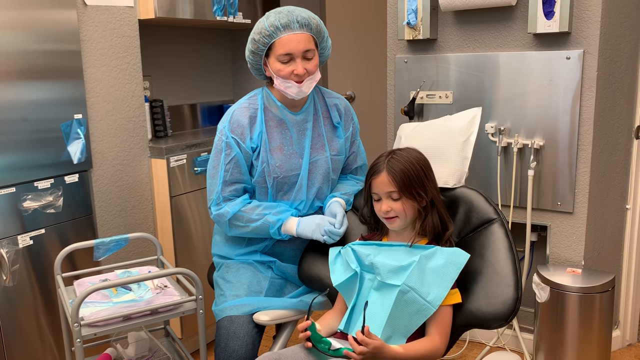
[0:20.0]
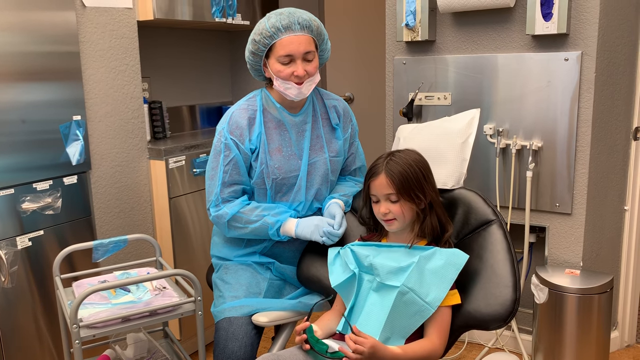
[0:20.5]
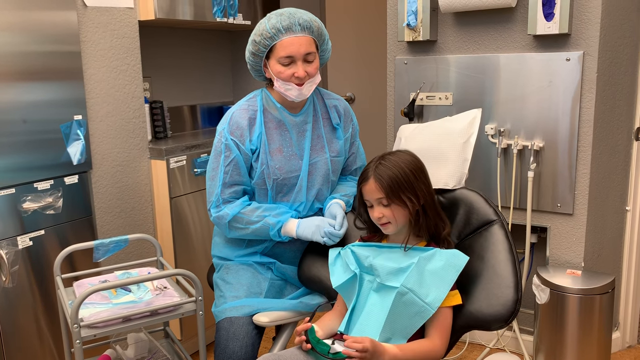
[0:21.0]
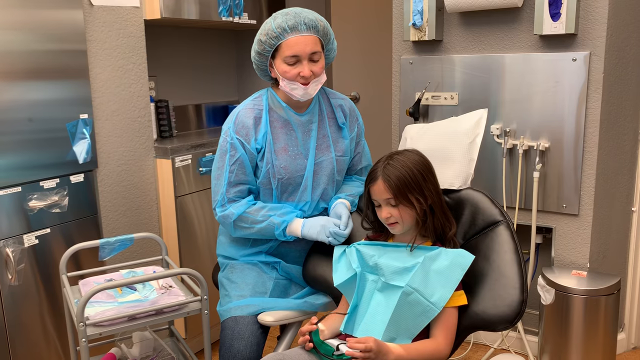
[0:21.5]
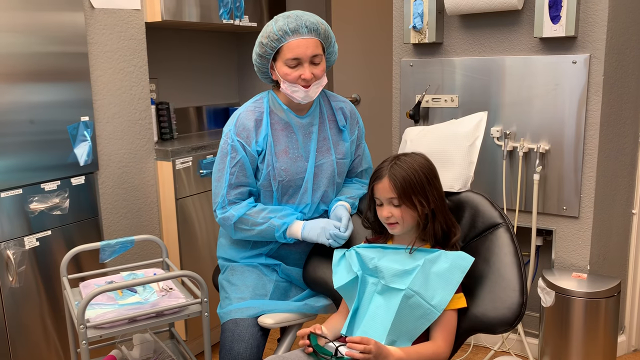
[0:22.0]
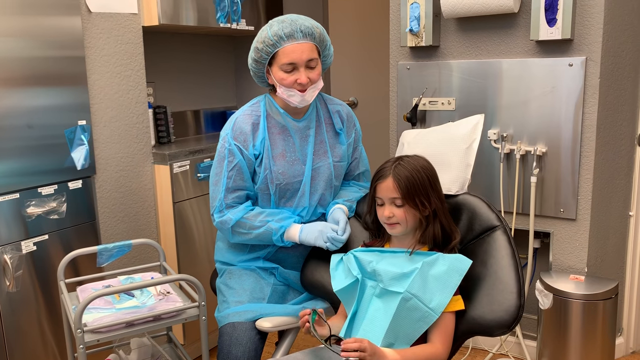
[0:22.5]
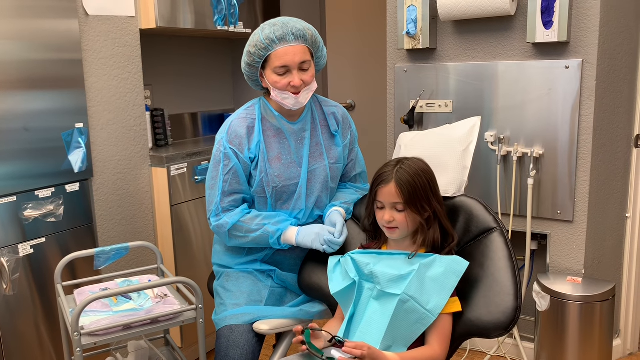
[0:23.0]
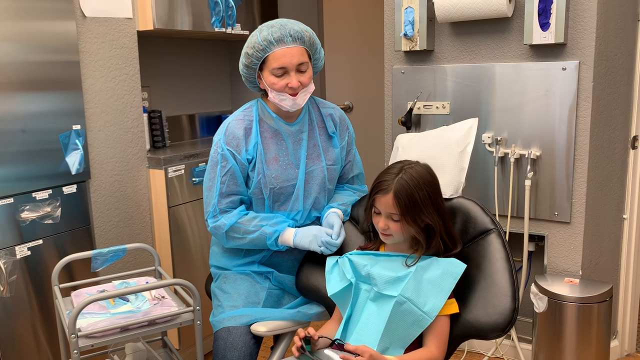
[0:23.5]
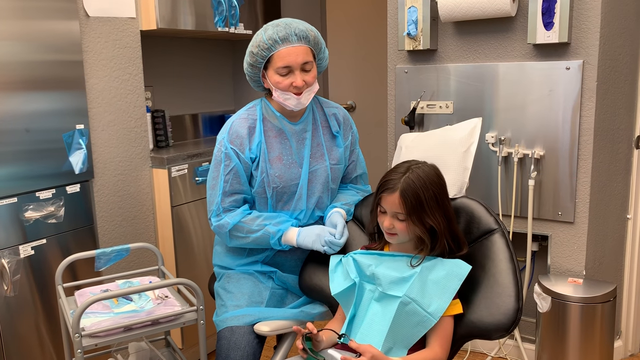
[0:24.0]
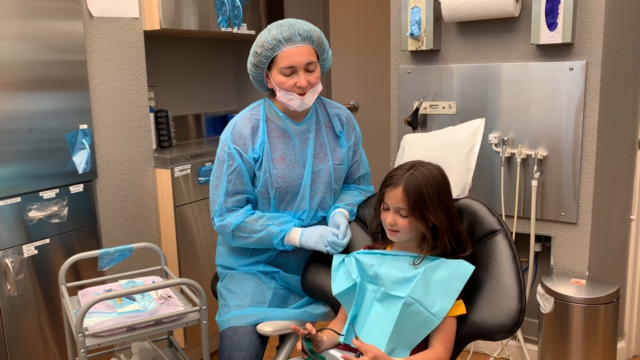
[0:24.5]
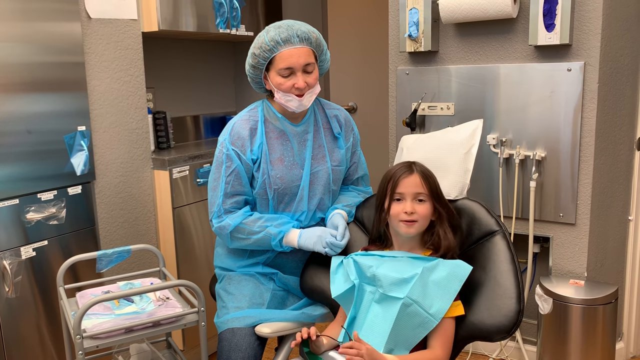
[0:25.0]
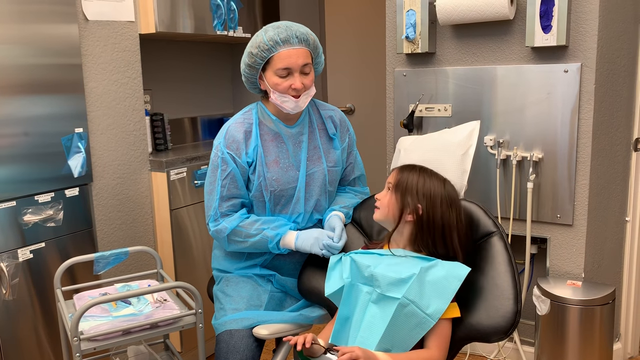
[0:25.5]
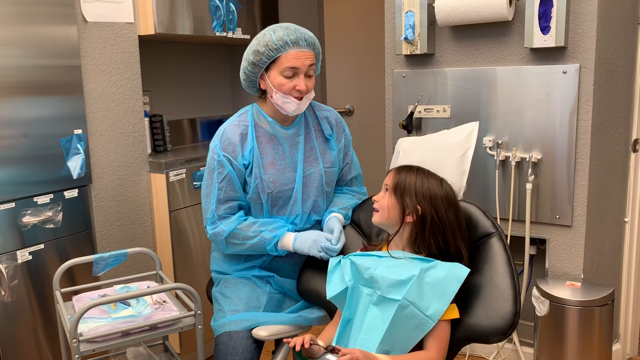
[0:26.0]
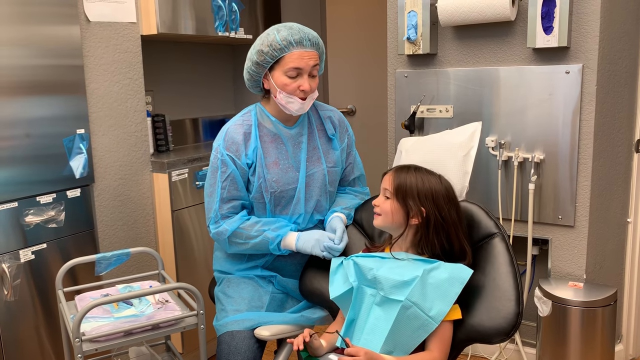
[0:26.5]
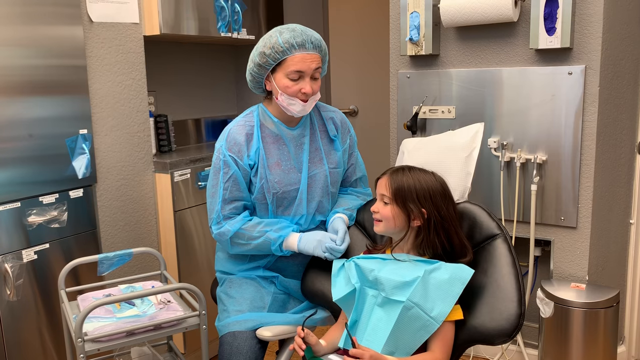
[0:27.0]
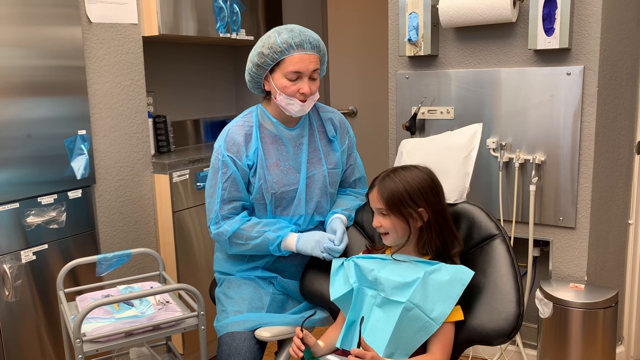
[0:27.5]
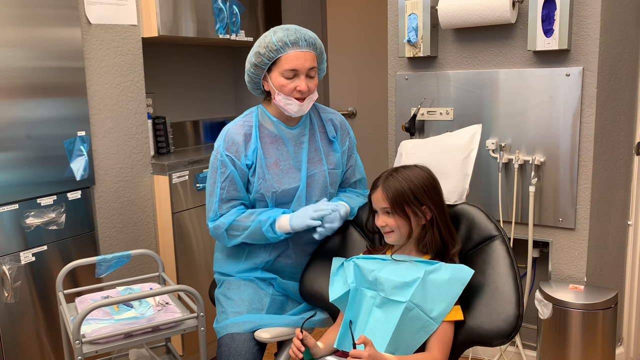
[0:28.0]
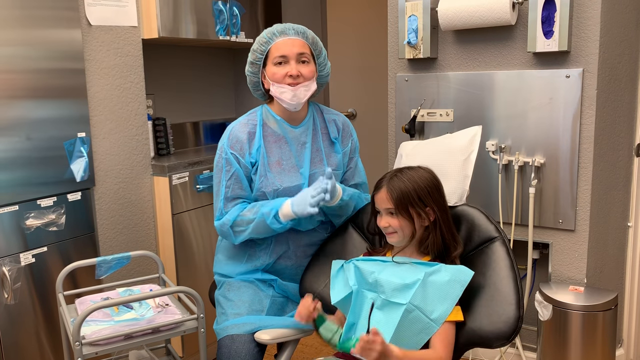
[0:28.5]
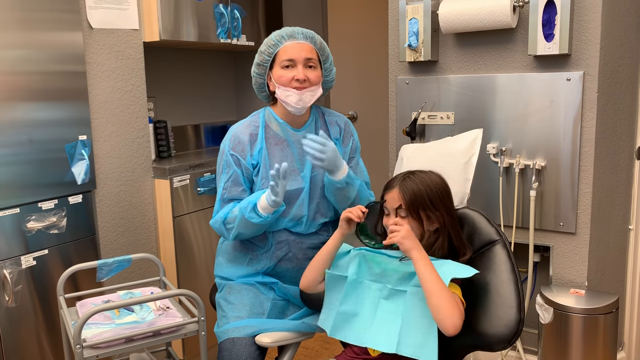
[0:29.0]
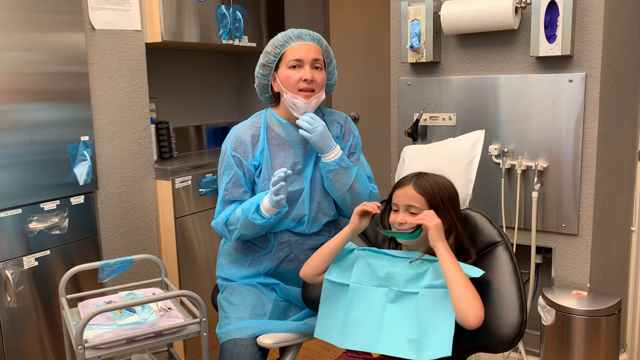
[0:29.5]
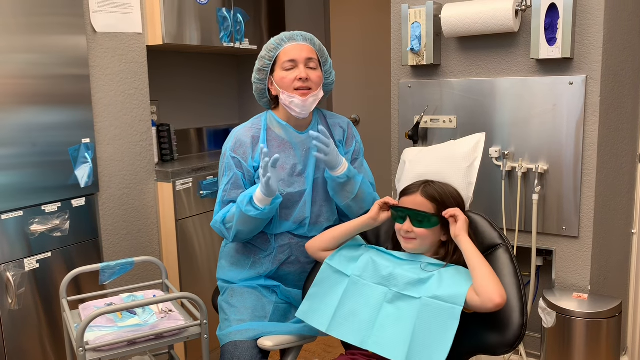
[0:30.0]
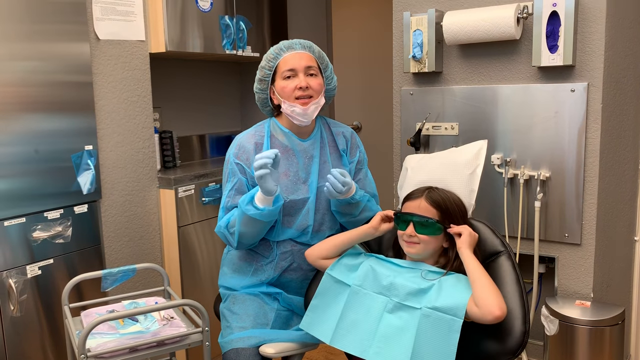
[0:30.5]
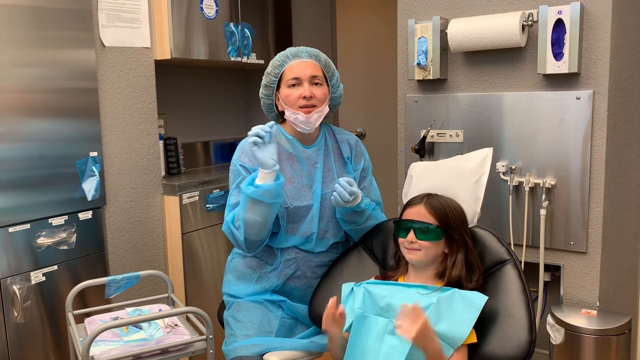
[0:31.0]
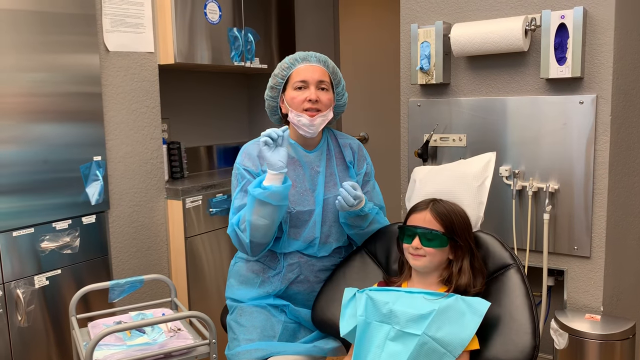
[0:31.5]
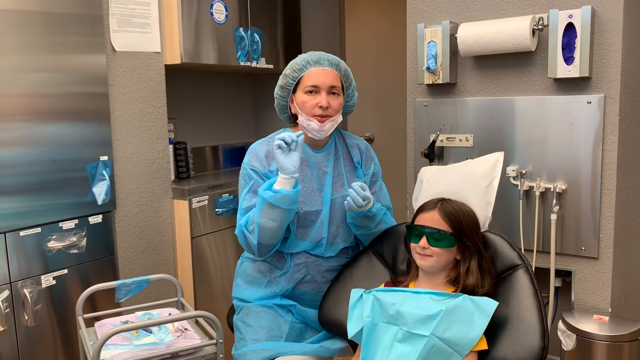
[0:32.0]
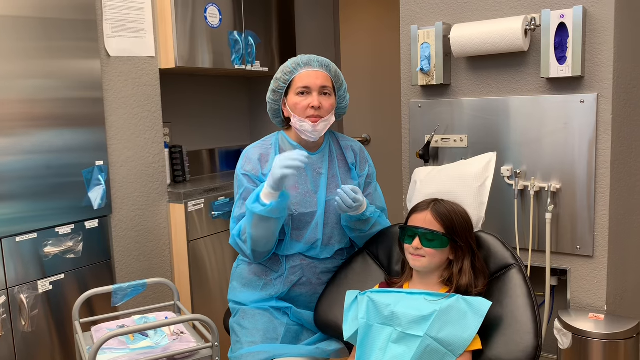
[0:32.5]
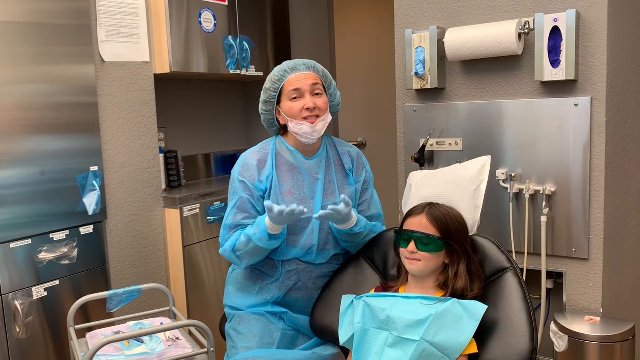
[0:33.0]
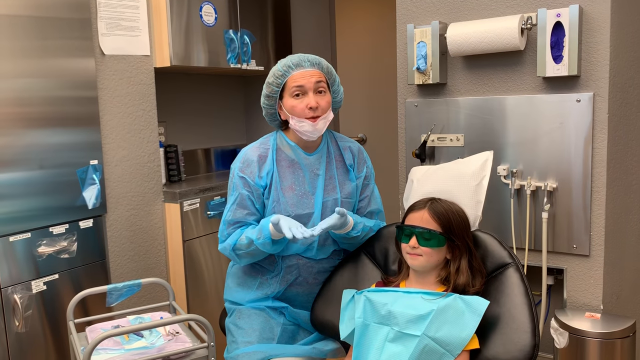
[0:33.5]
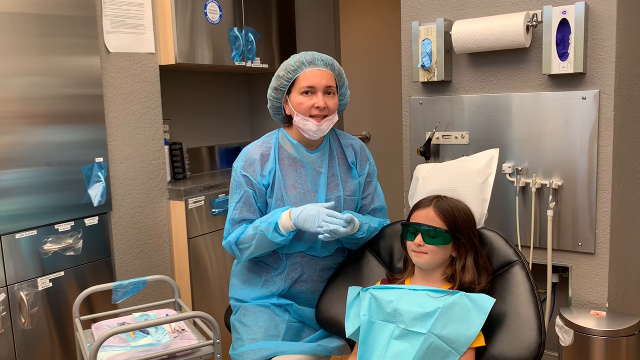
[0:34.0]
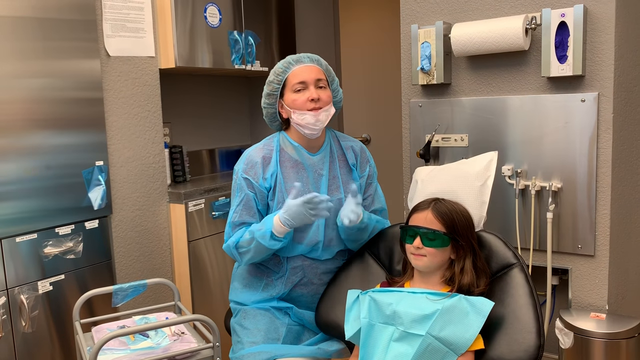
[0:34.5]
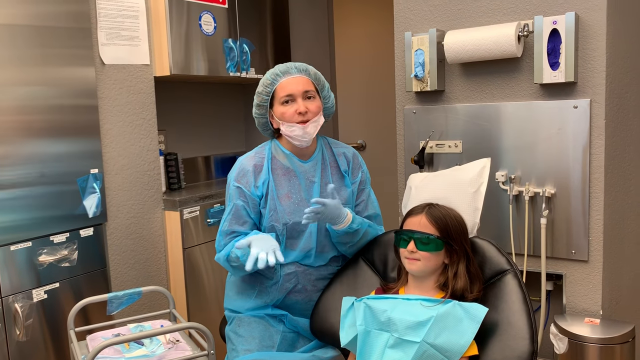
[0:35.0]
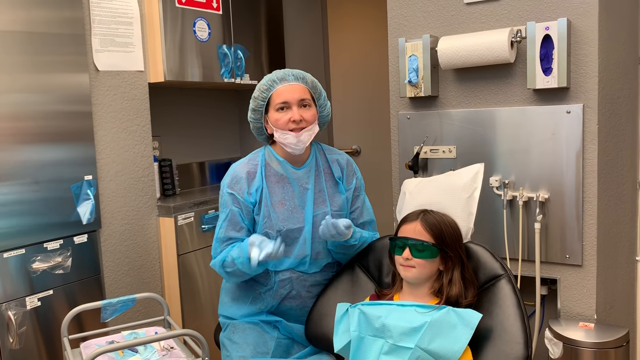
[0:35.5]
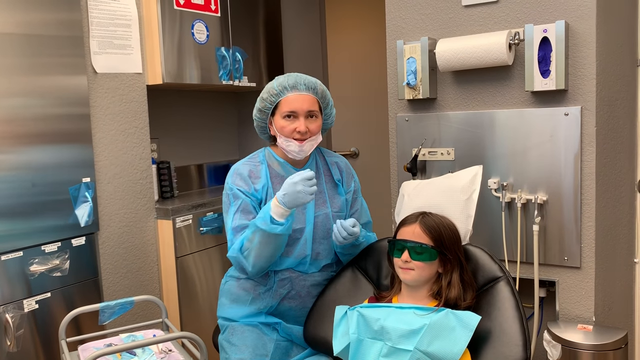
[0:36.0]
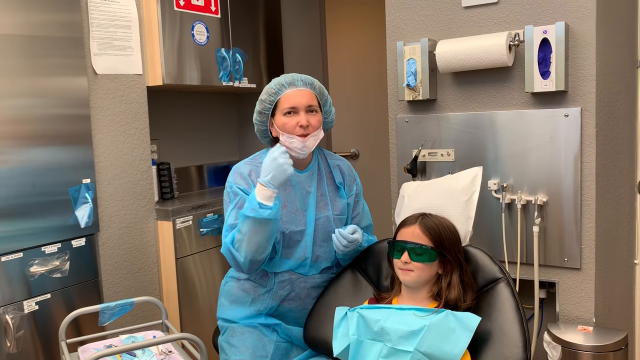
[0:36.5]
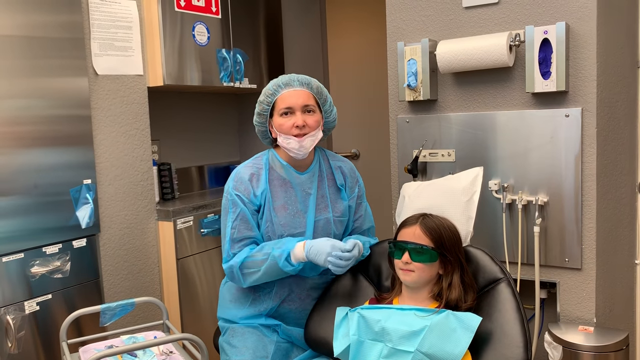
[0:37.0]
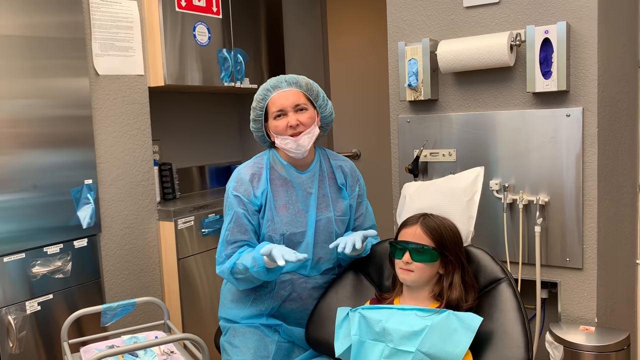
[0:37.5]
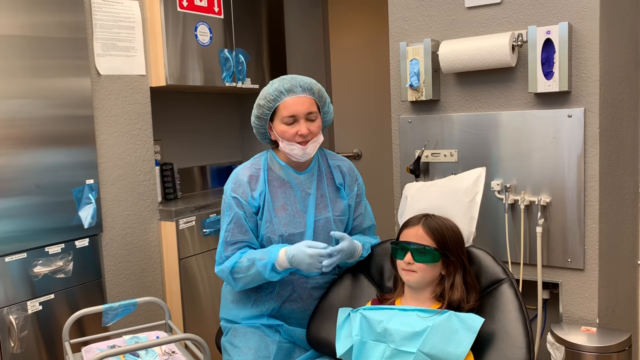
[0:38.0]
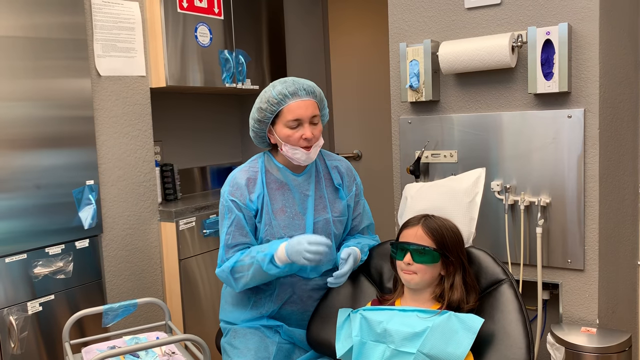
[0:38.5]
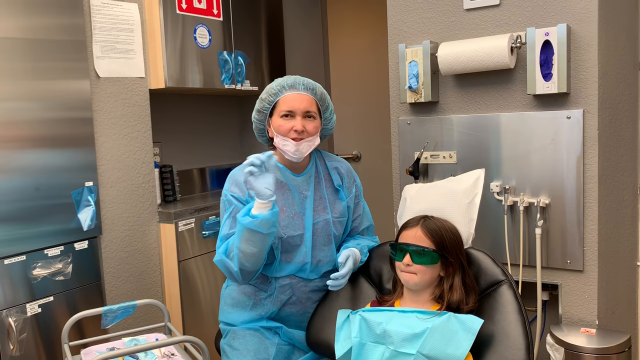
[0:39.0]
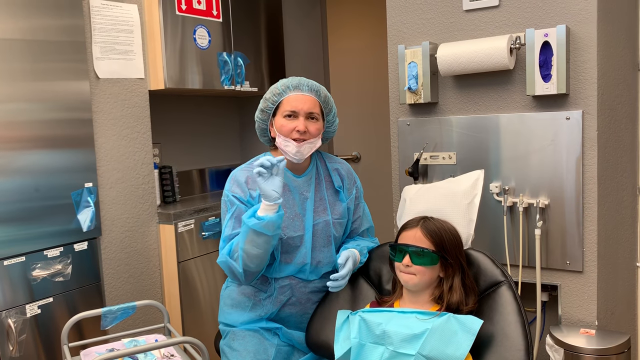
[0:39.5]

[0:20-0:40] The little girl looks down at the sunglasses, talking, and then looks over at the dentist. Before starting to talk, the dentist pulls down her white face mask, and her mouth moves as she speaks; it appears they are about to start the procedure. The dentist claps her hands, looks directly at the camera, and gestures with her hands as she apparently explains what is going to happen. Using her right hand, she seems to make the motion of writing as she talks. The little girl puts on the sunglasses, which have forest green lenses. She sits in the chair, which is black, in the dentist's exam room.